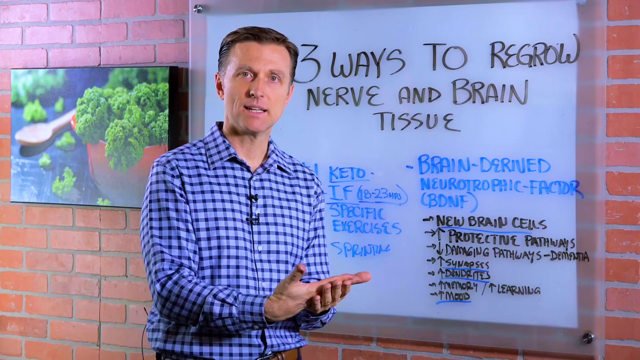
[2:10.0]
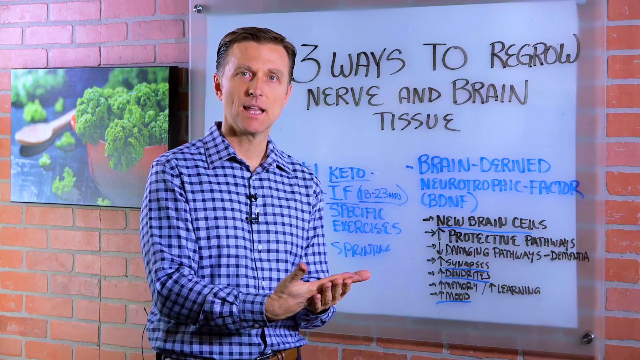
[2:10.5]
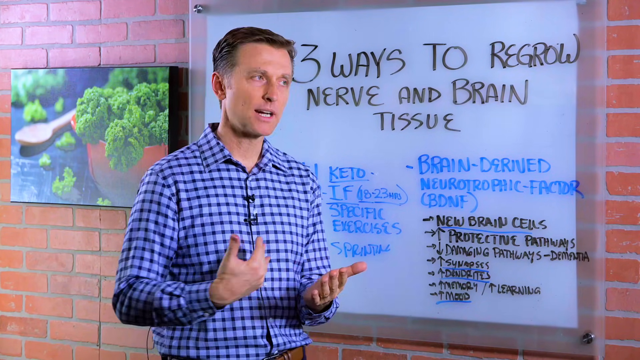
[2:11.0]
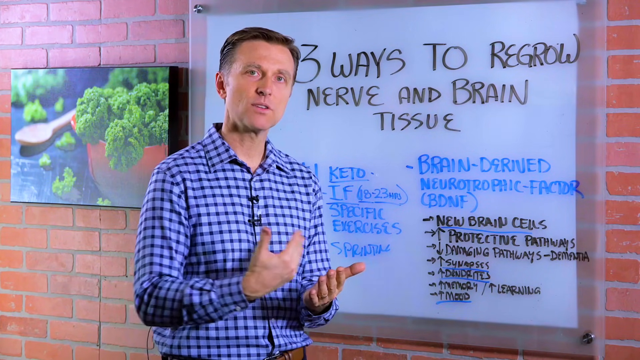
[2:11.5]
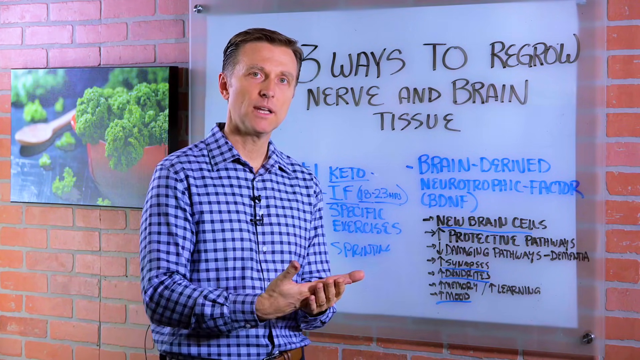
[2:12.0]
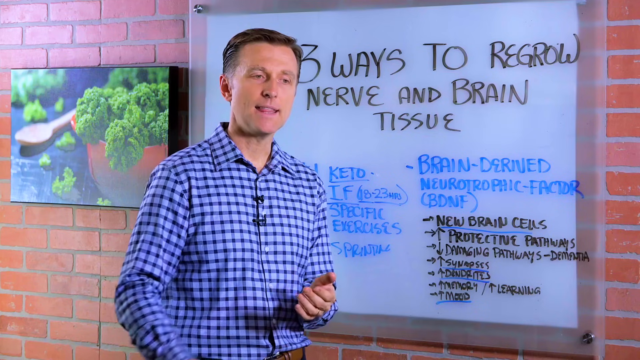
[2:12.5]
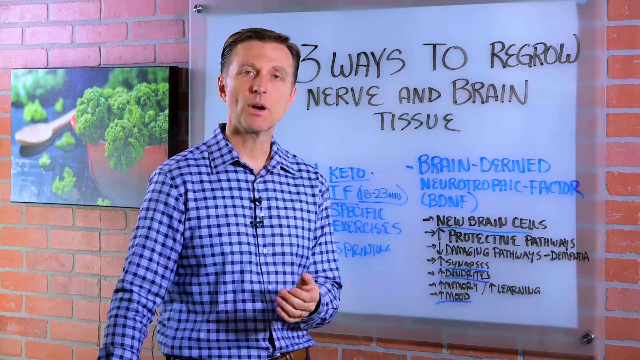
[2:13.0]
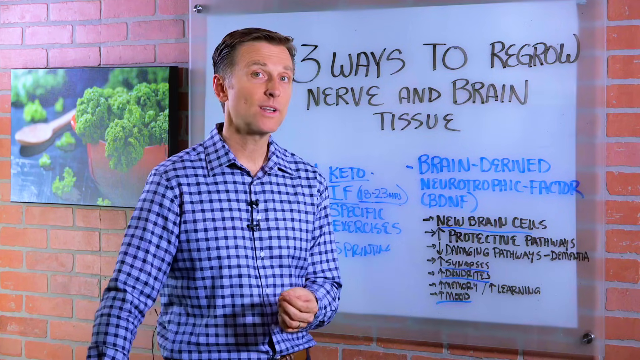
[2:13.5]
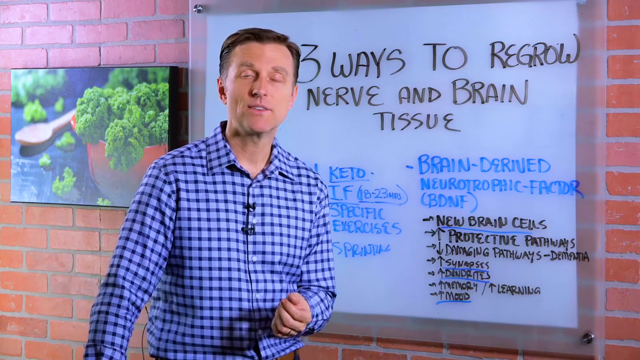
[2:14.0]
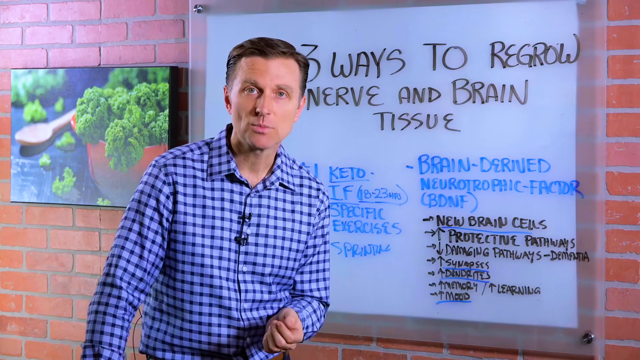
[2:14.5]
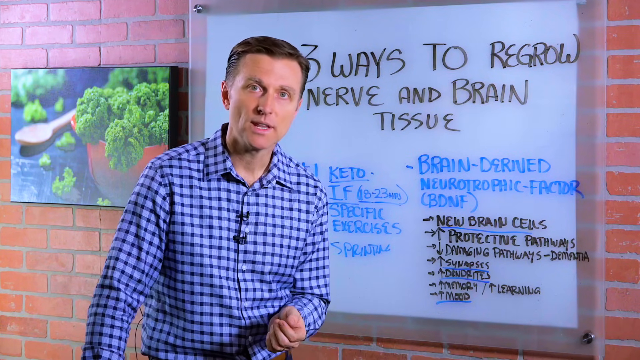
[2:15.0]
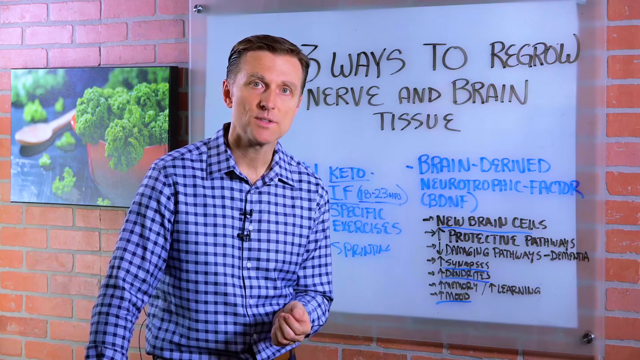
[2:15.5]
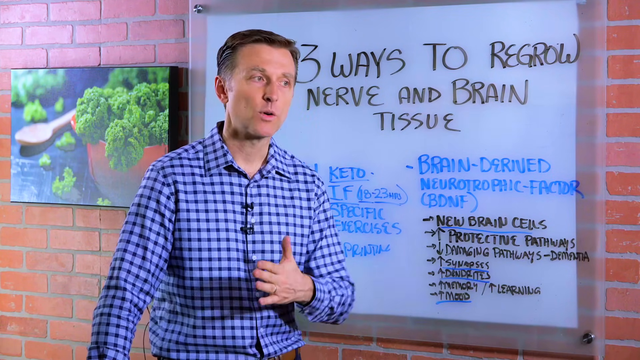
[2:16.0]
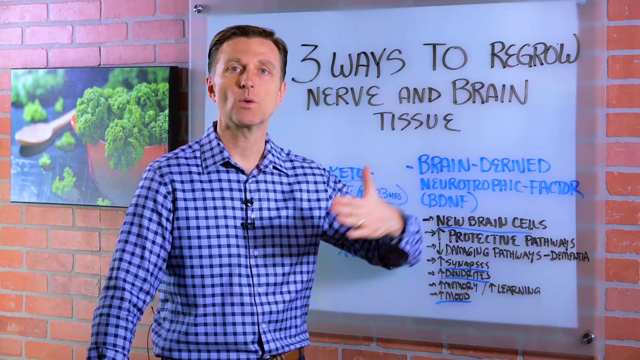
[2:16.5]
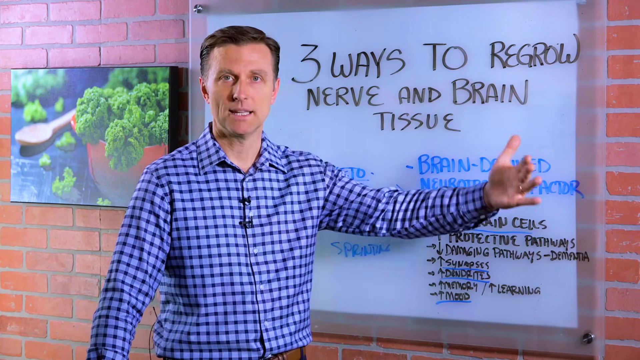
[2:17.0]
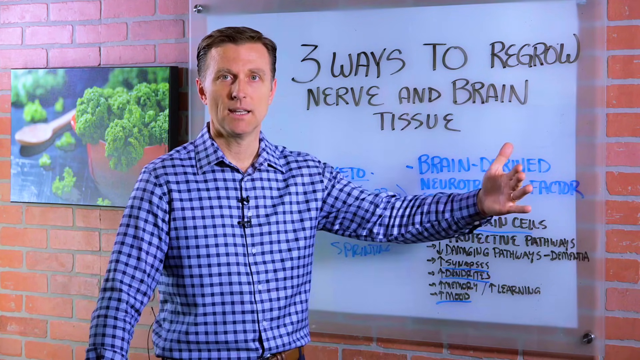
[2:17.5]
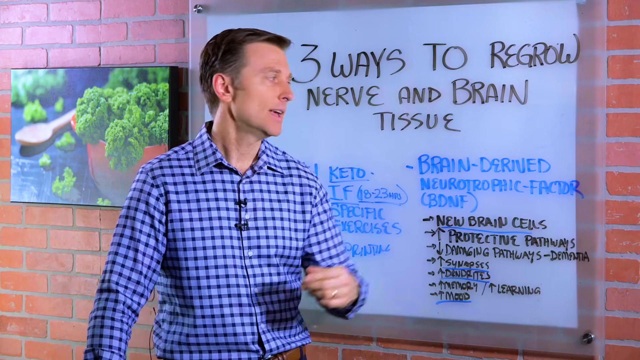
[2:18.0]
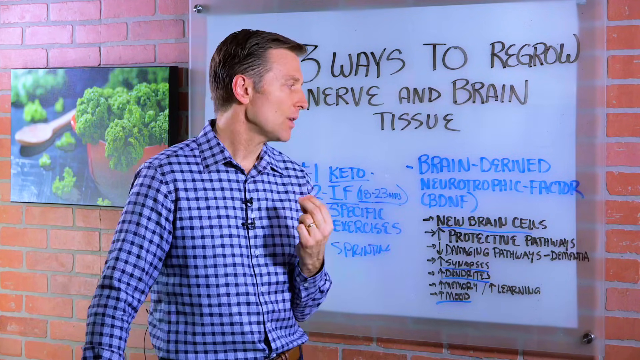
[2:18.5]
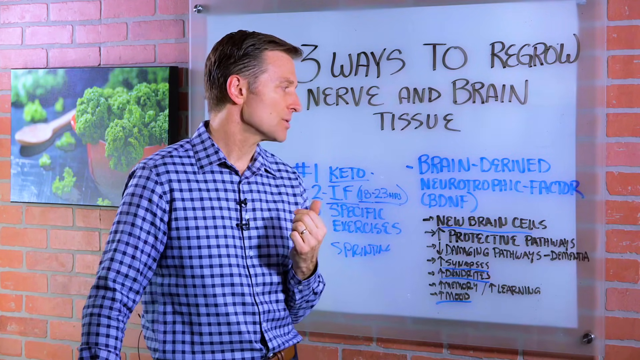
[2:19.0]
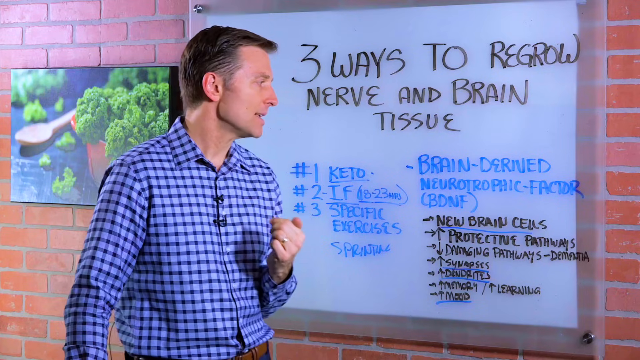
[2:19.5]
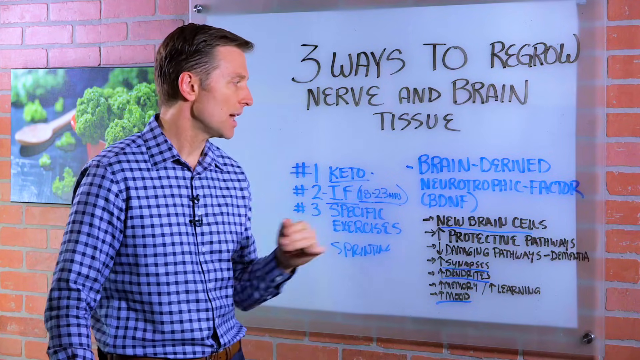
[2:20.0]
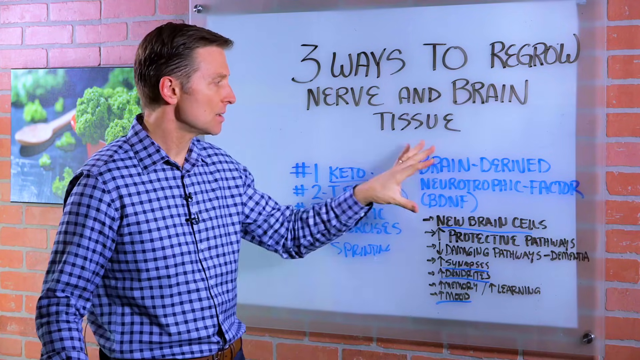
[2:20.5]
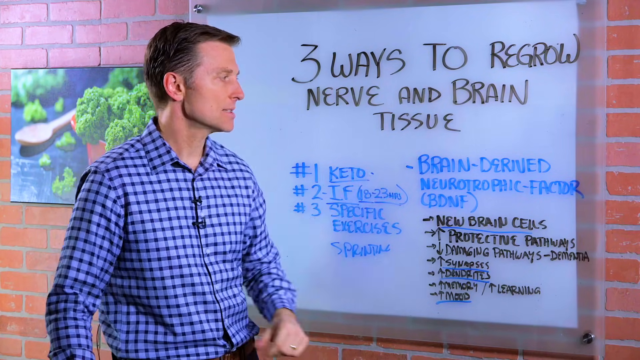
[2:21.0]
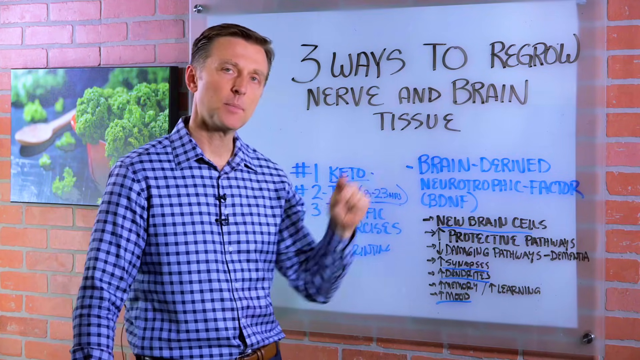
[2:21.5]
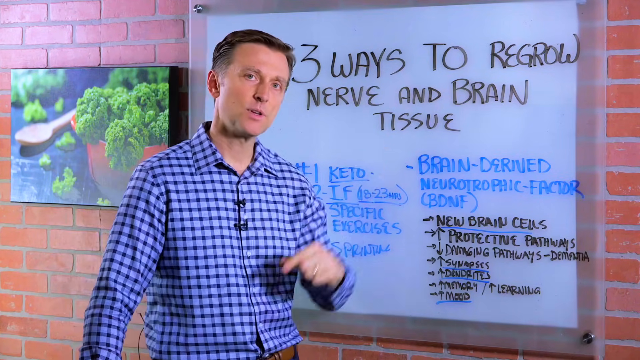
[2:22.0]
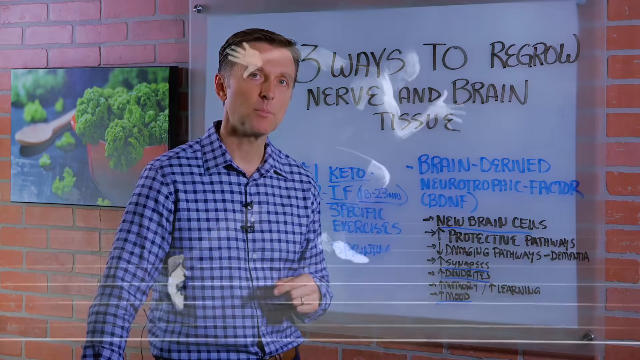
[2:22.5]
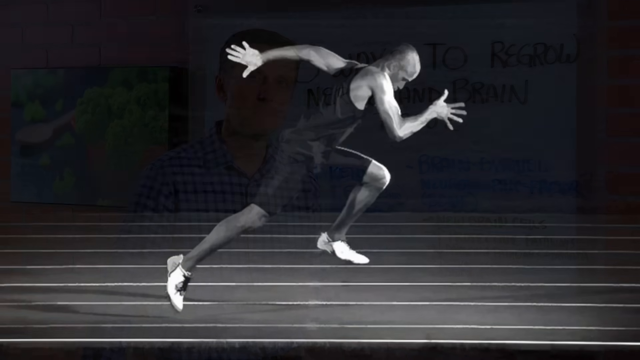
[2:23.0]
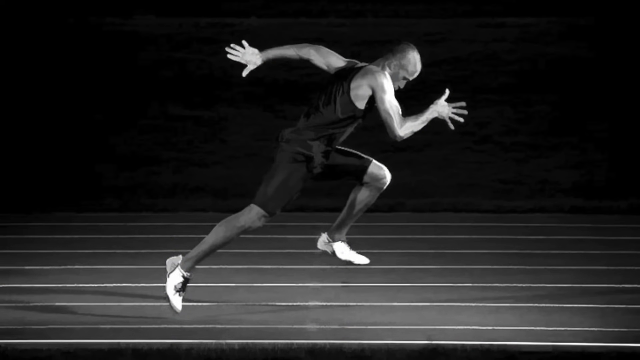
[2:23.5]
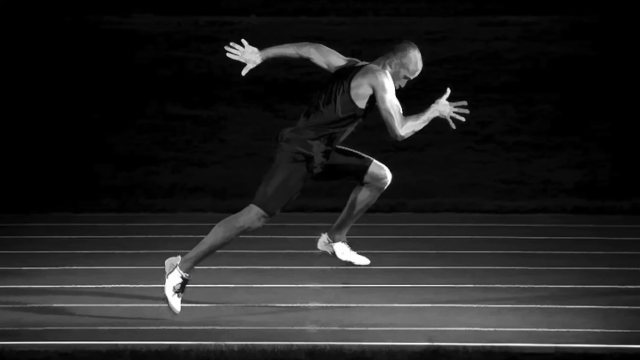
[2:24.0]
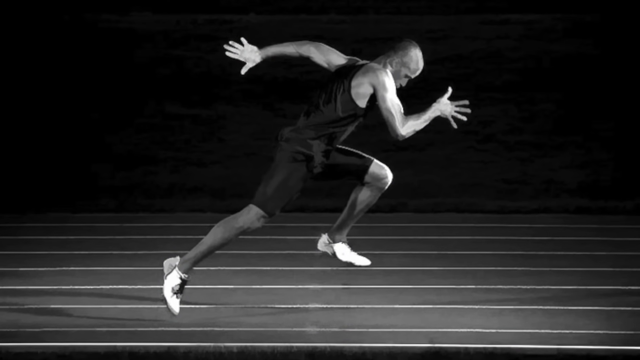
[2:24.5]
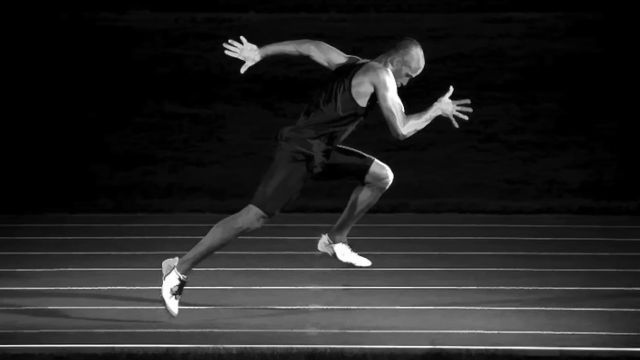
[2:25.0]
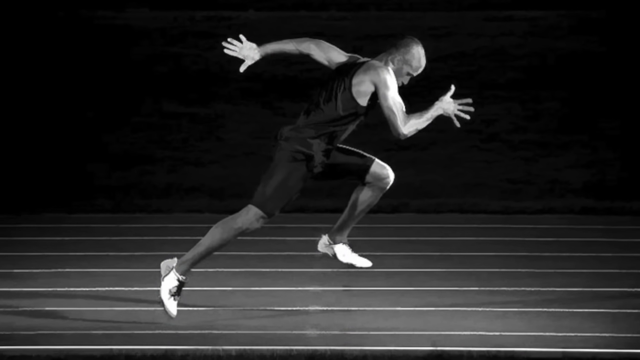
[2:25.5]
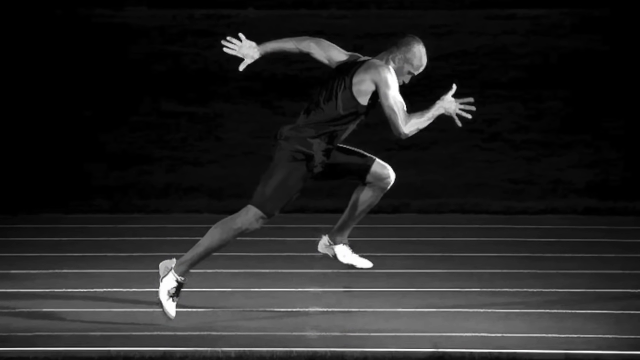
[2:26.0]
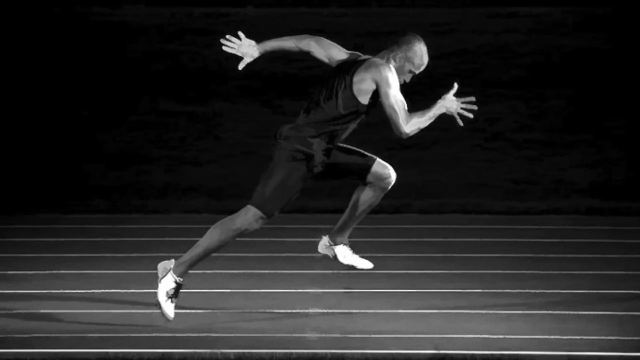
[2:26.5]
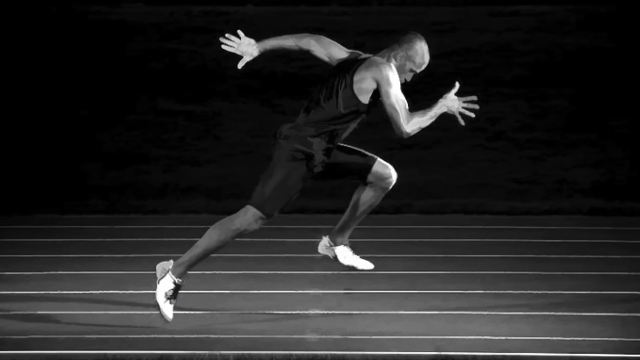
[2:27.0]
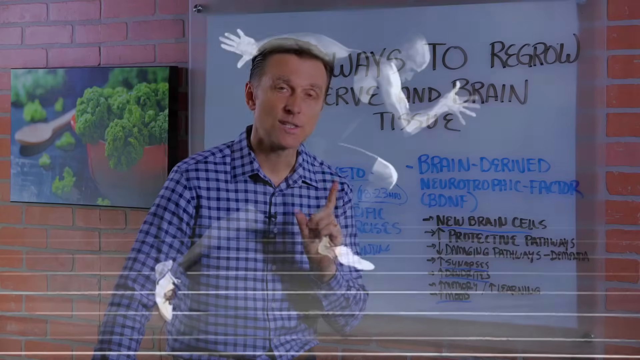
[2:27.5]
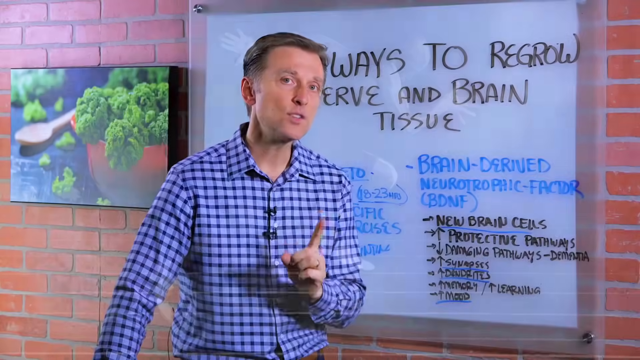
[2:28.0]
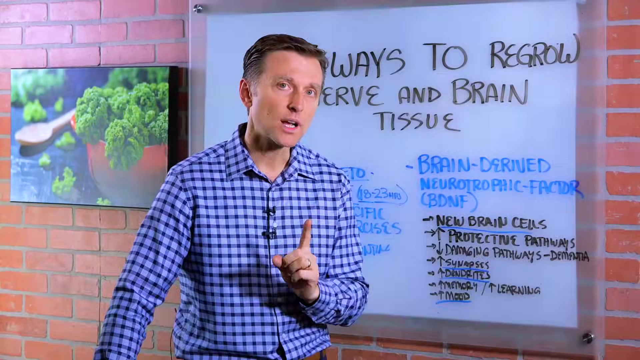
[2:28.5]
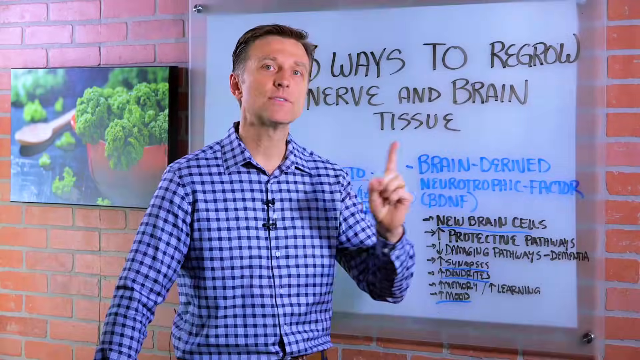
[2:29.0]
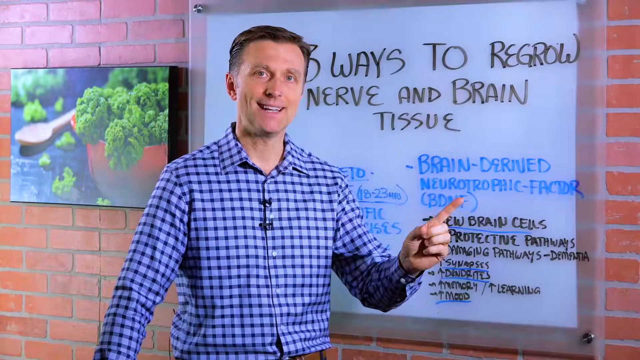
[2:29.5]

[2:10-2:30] A man talks to the camera, talking with his hands and appearing to place one hand on top of the other as he explains the whiteboard behind him. The video cuts to a black-and-white still picture of a person running very fast. In black ink the whiteboard reads "three ways to regrow nerve and brain tissue." On the left is a numbered list, apparently from one to three, with topics such as keto, and on the right there seems to be a longer bullet list written partly in blue ink and partly in black ink. The whiteboard is attached to a brick wall that also has a painting or portrait of a red bowl with green vegetables in it, resting on what appears to be a black surface, possibly a table, along with a wooden spoon and pieces of the same vegetable.